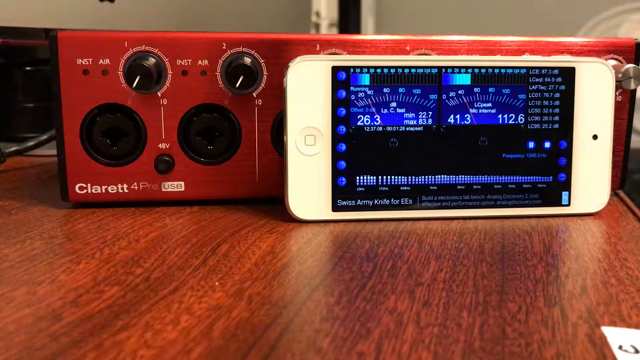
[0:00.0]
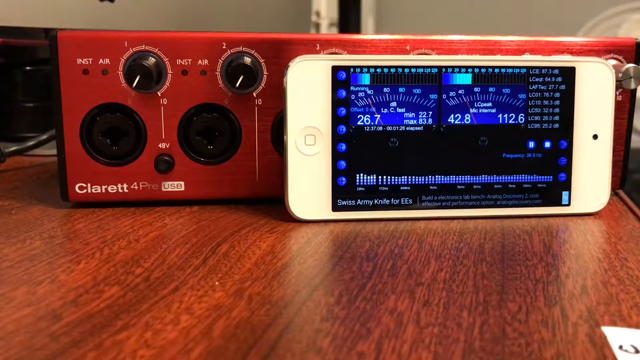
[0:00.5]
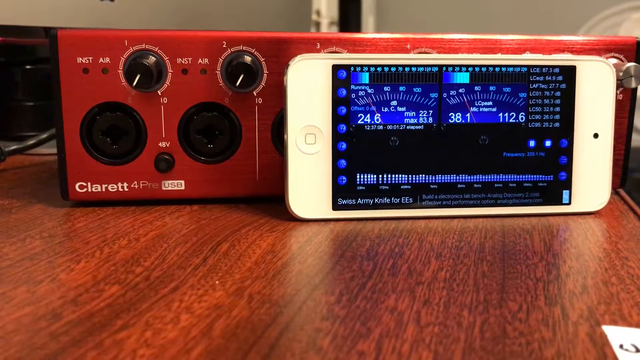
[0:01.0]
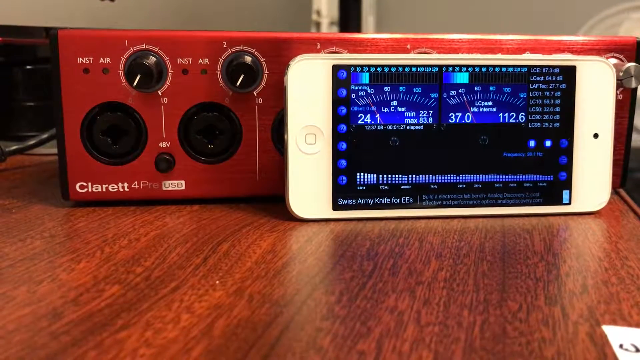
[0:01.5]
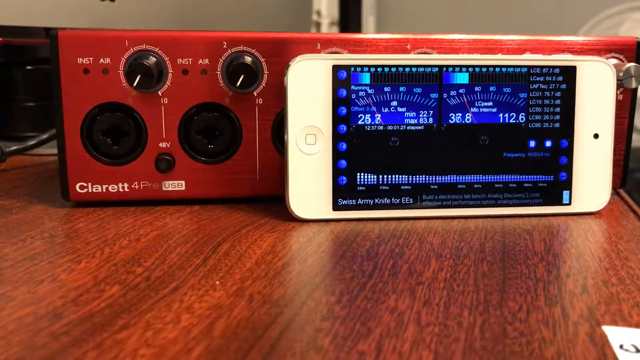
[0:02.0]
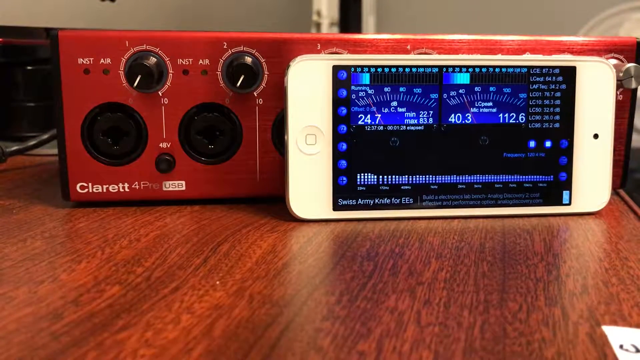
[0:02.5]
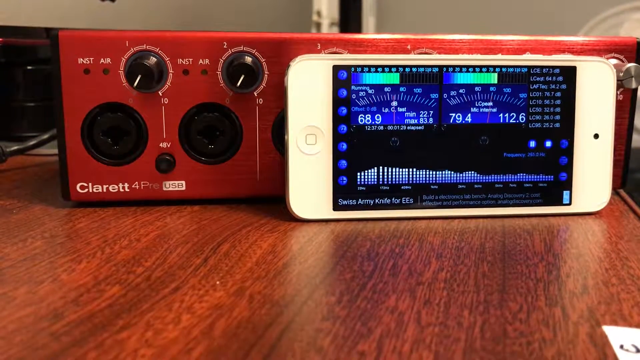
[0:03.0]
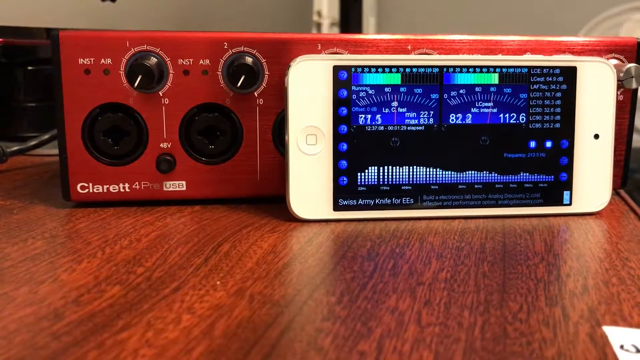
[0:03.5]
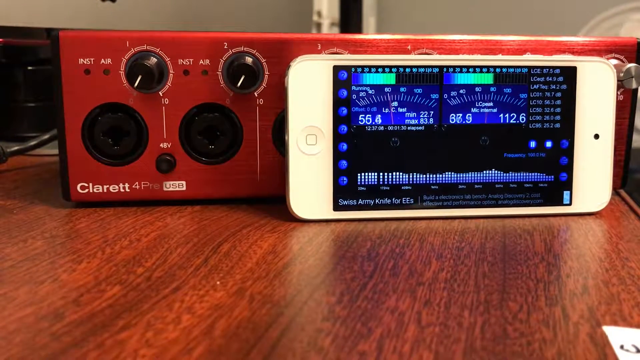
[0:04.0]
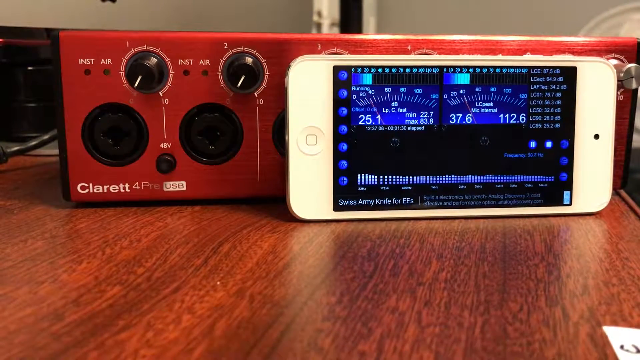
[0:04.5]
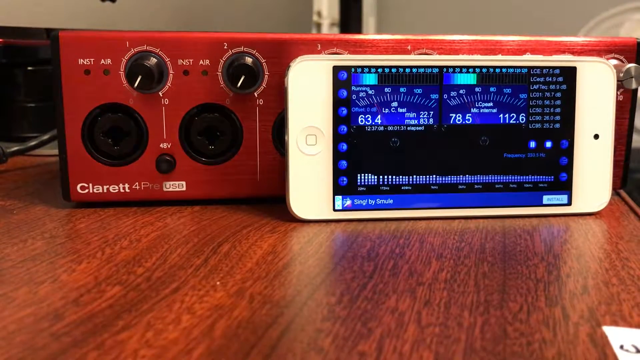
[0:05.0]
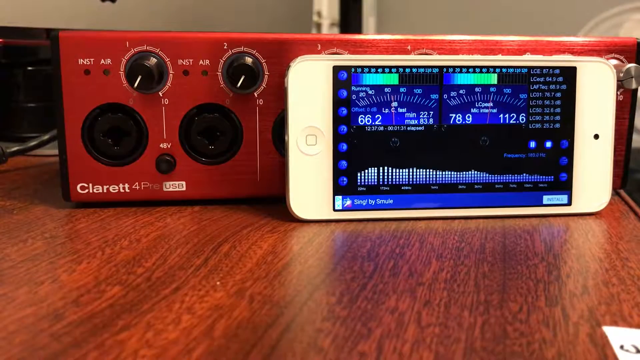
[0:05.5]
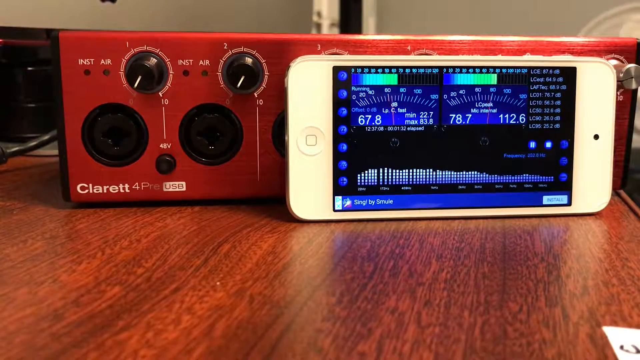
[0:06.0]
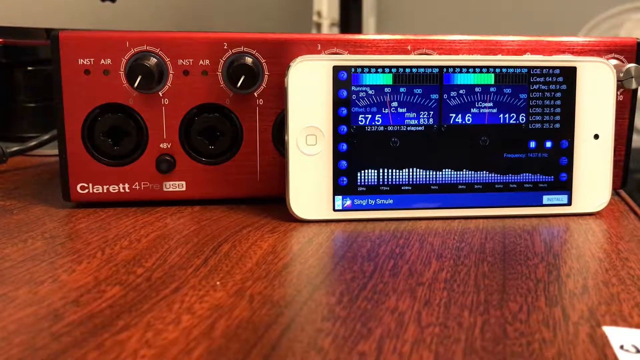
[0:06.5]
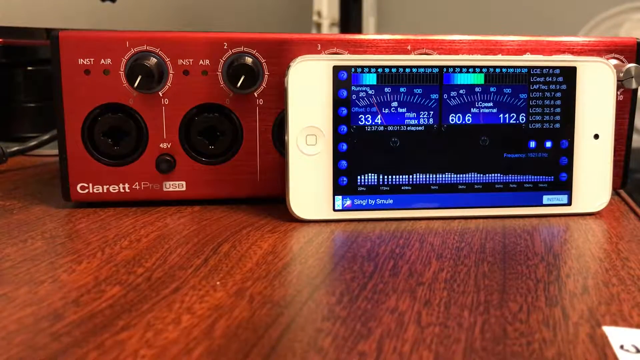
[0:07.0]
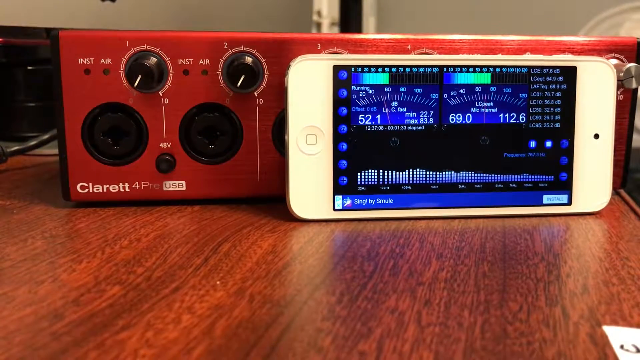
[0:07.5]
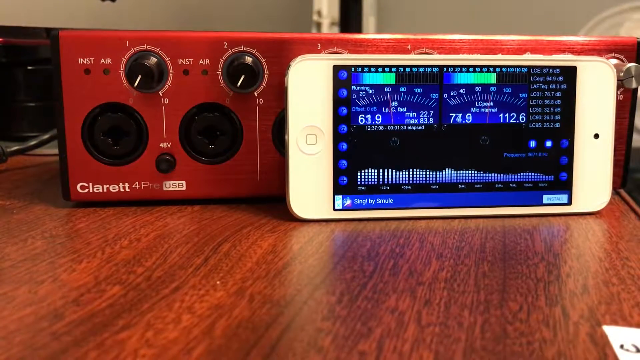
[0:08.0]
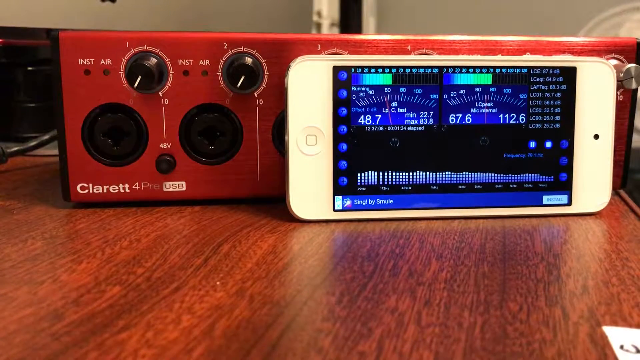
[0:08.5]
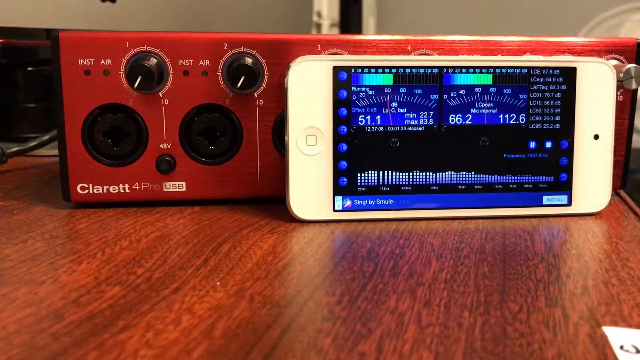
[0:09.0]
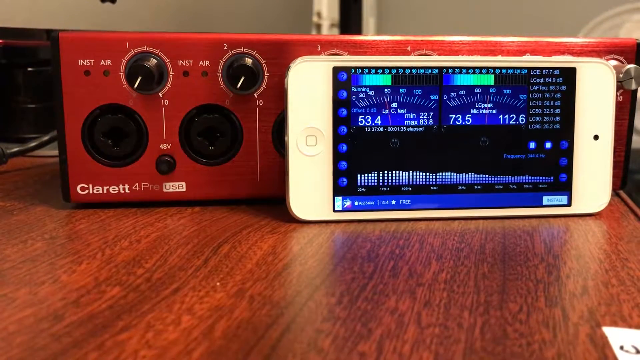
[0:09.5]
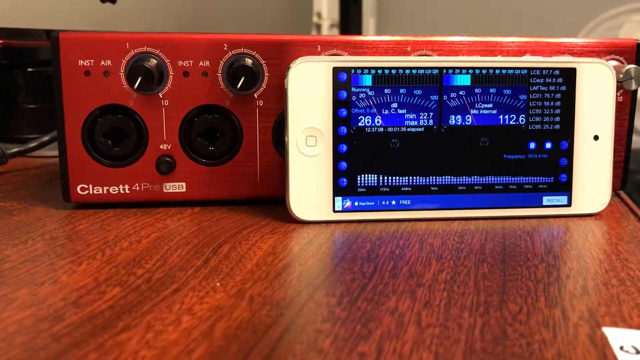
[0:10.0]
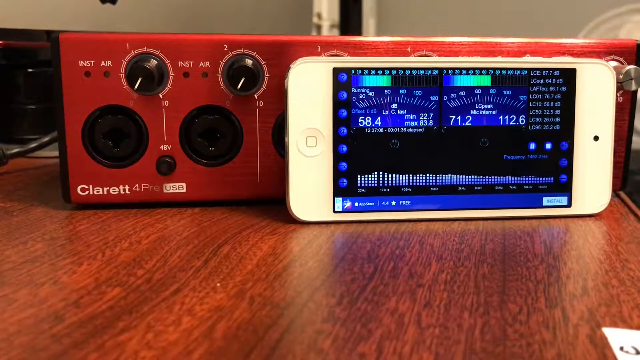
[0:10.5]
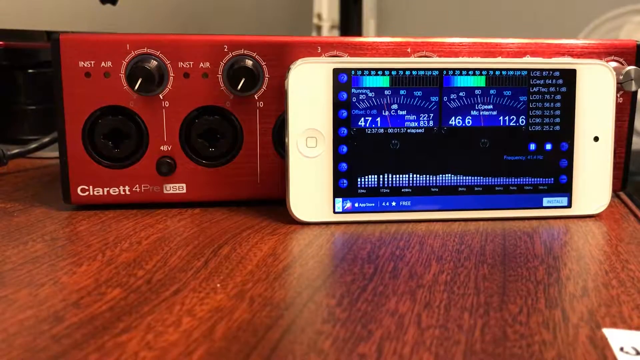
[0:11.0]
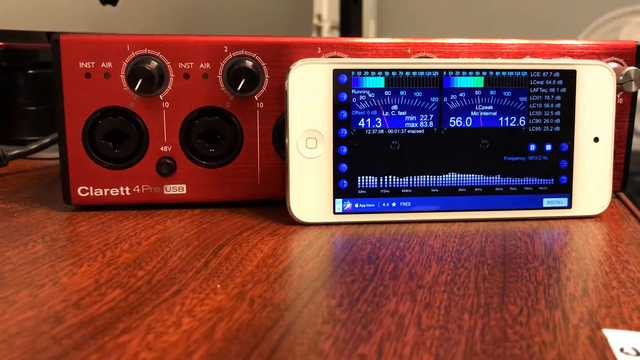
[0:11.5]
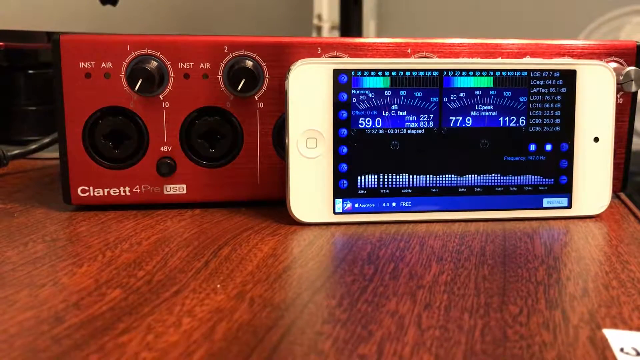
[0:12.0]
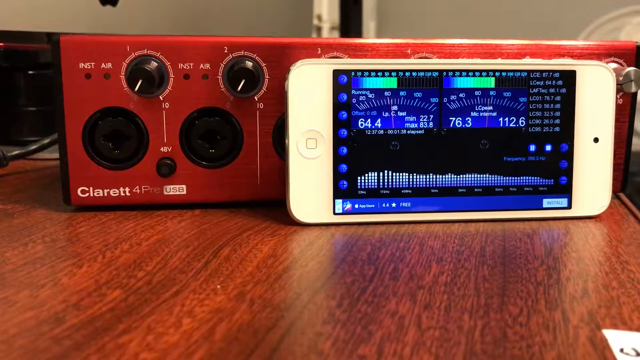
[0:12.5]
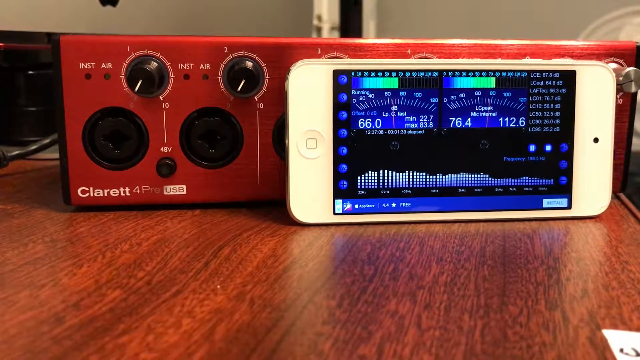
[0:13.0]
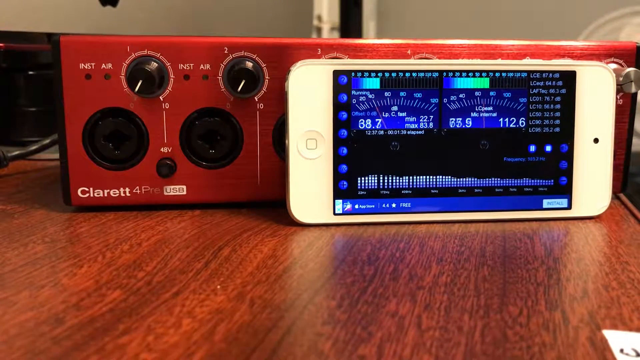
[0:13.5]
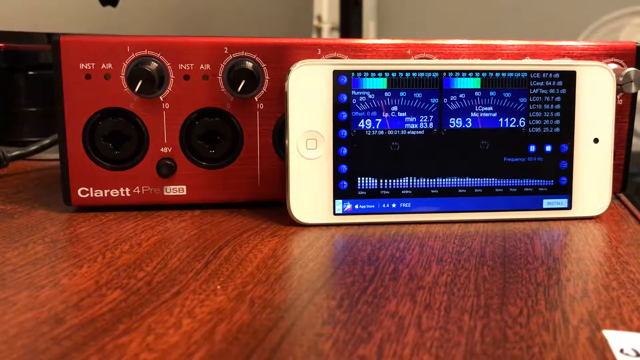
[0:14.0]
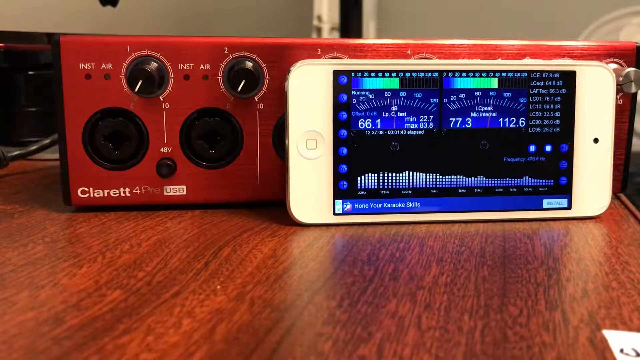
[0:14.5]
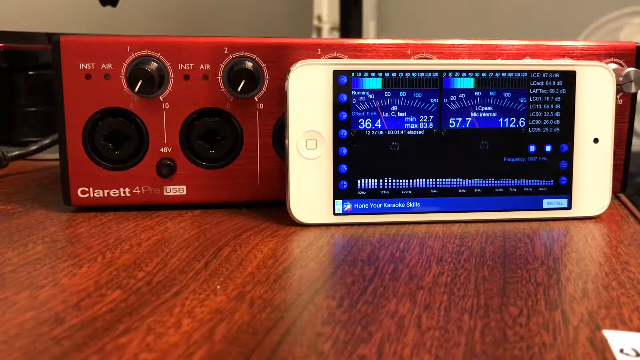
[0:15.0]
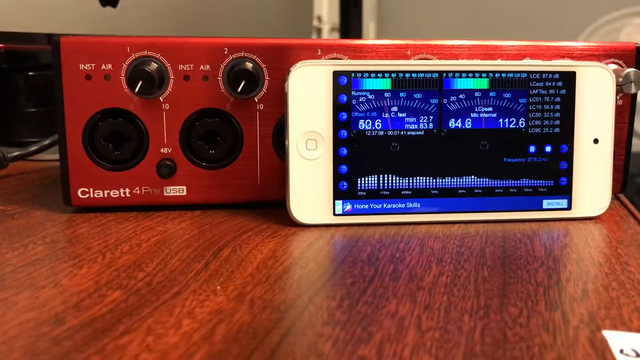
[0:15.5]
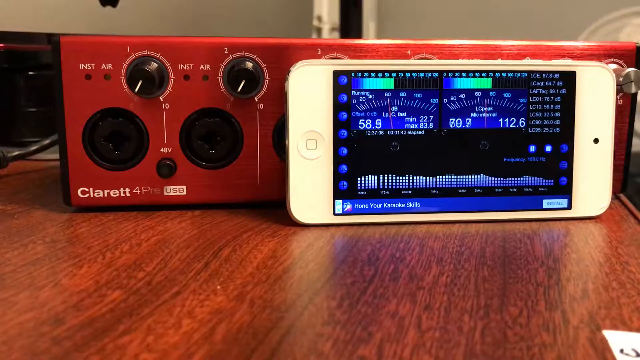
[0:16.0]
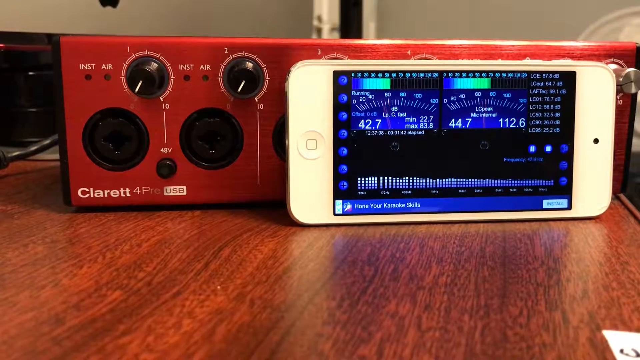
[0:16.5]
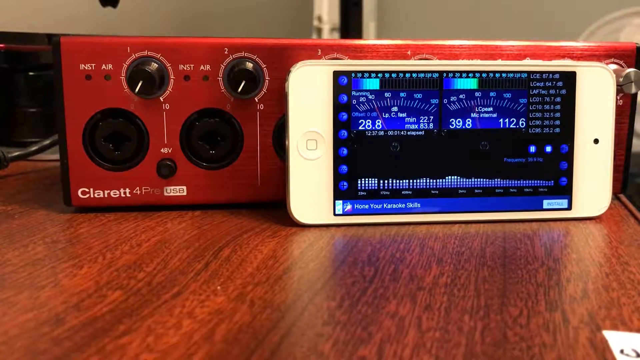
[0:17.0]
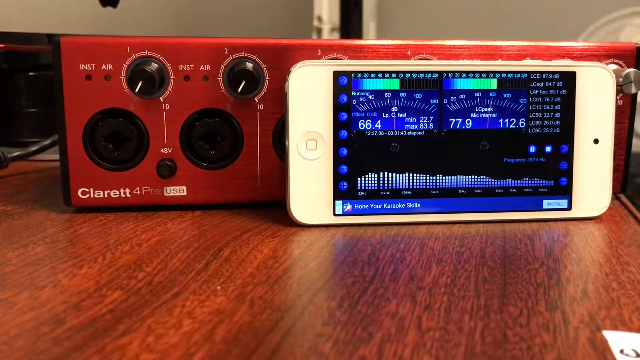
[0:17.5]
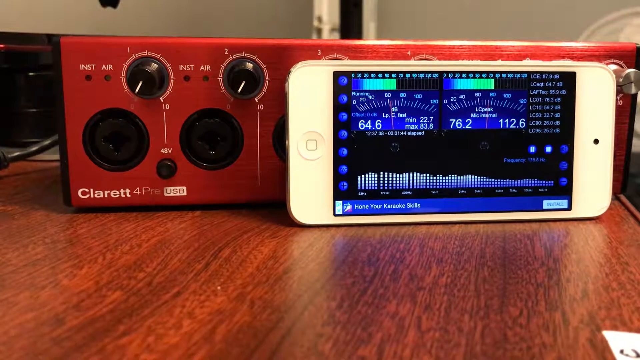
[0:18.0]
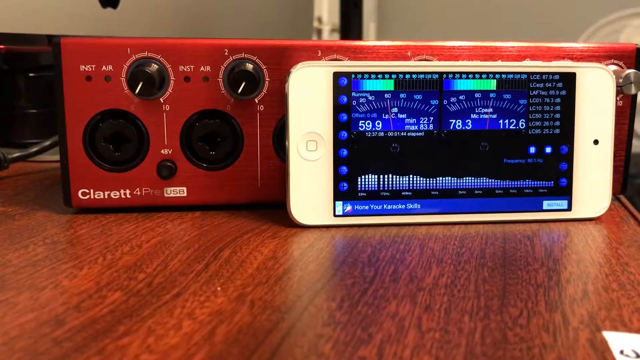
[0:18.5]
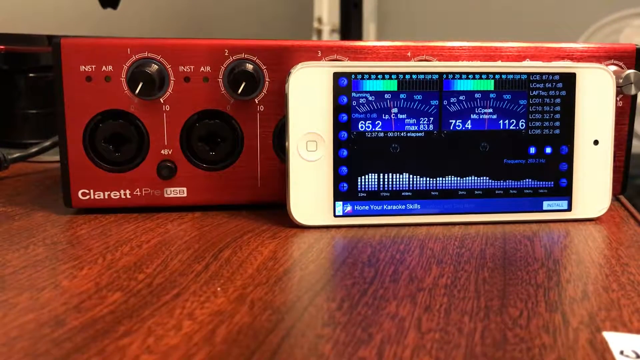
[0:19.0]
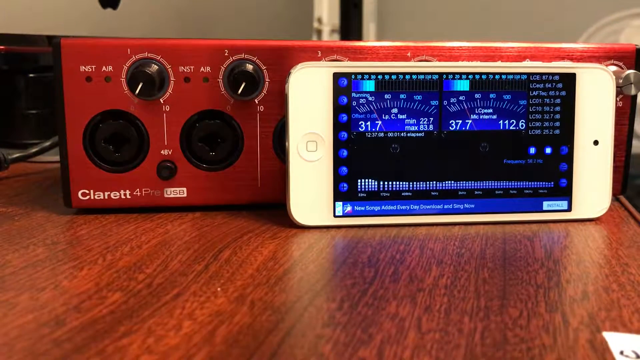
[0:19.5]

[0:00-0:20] A white, older-model iPhone is lying on its side, running some kind of monitor or counter that looks like it might count like a Geiger counter. It has two different panels, each with a red number at the bottom left, plus some kind of total number. Progress bars or loudness bars go up and down, possibly monitoring audio. A gauge moves up and down the scale between 80 and 90, peaking at about 80 to 90. Behind the iPhone is an instrument that looks like some kind of synthesizer or piece of music equipment for enhancing recordings; it says "USB" on it, so it runs on USB.